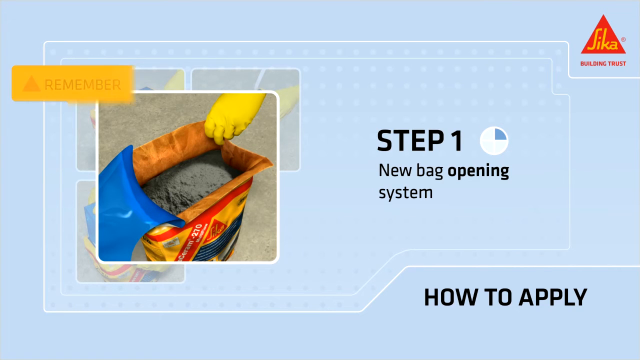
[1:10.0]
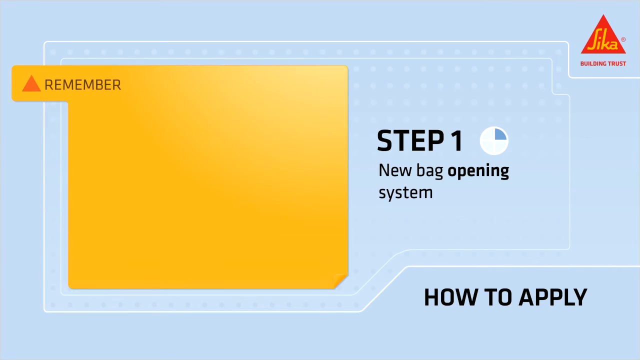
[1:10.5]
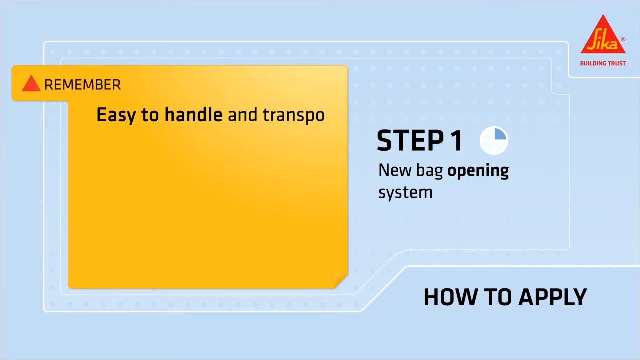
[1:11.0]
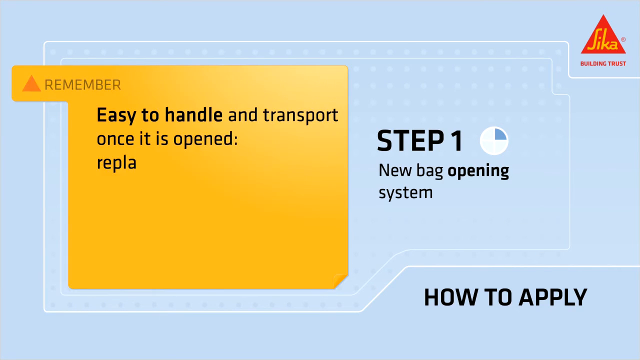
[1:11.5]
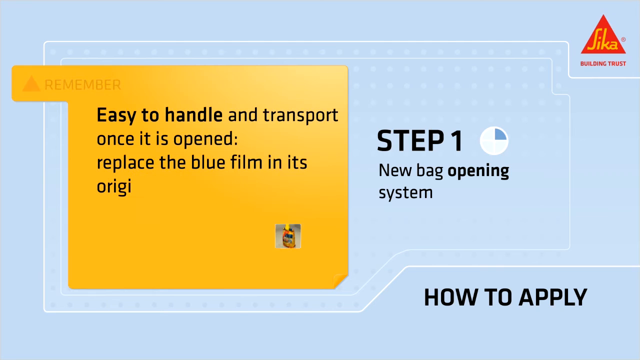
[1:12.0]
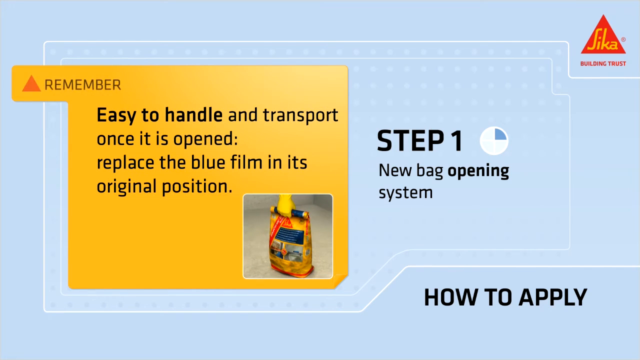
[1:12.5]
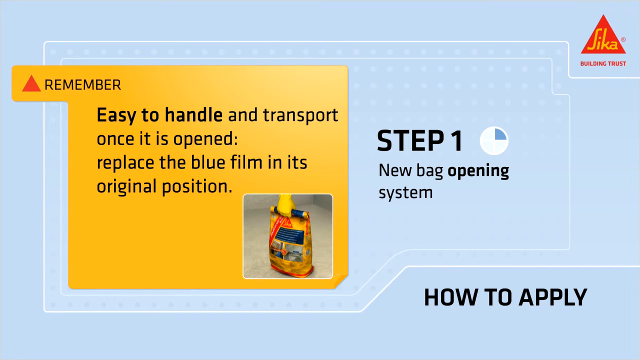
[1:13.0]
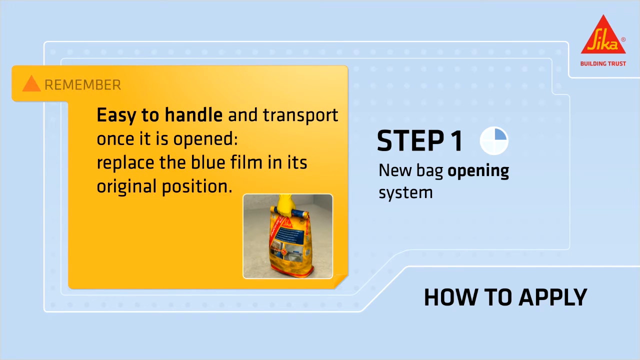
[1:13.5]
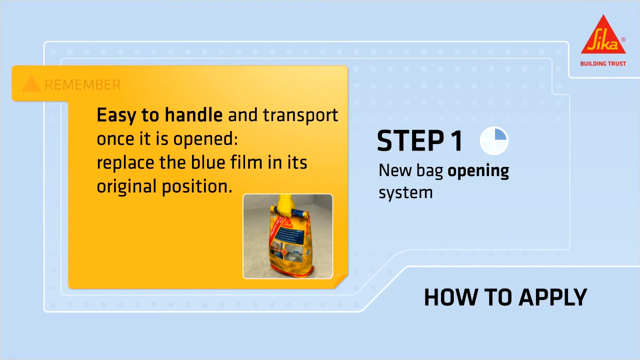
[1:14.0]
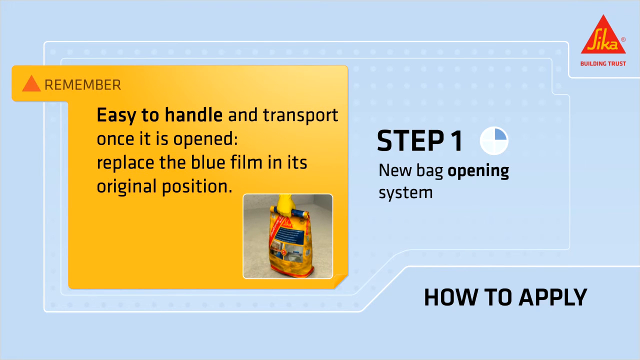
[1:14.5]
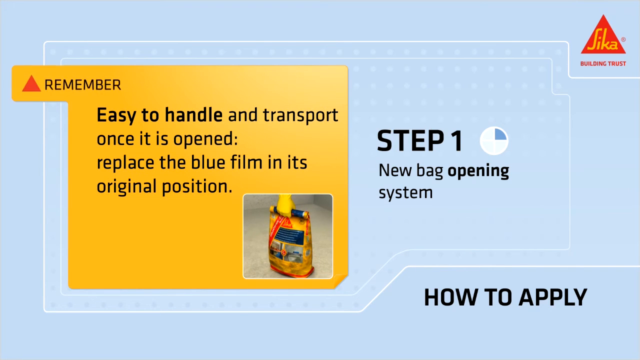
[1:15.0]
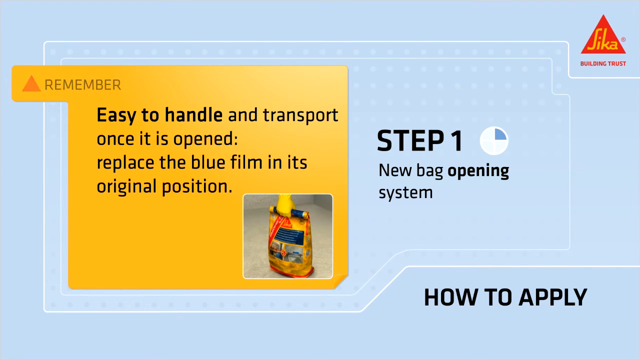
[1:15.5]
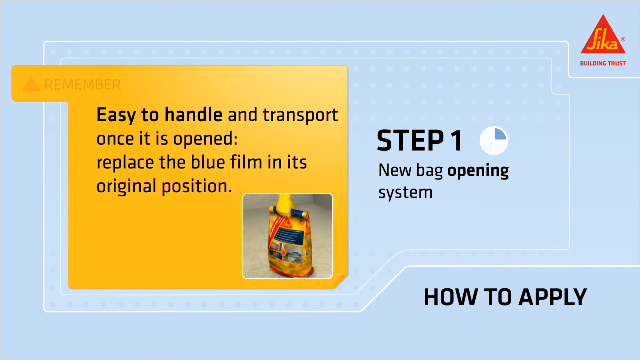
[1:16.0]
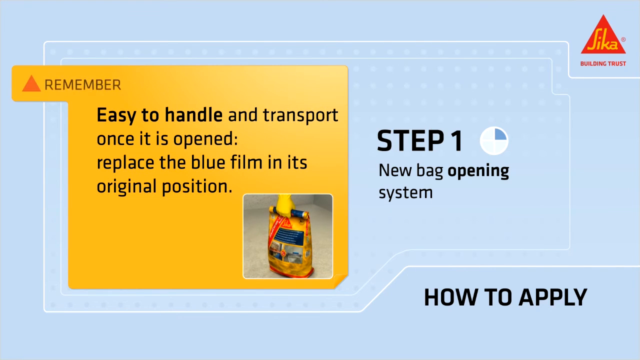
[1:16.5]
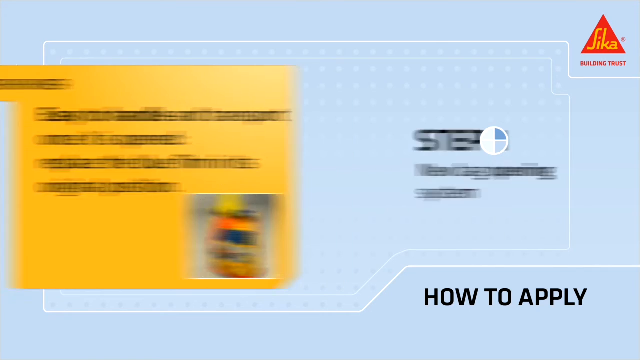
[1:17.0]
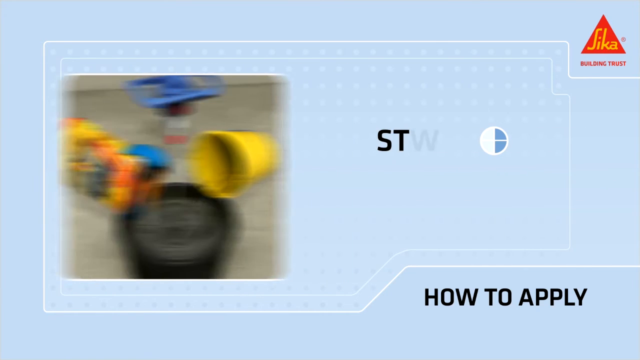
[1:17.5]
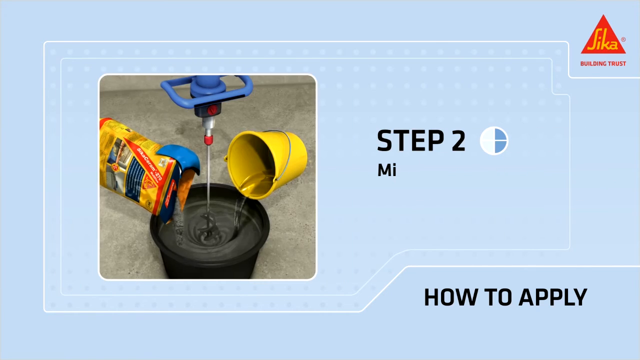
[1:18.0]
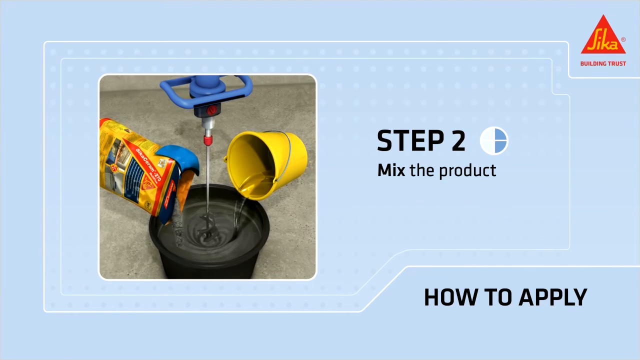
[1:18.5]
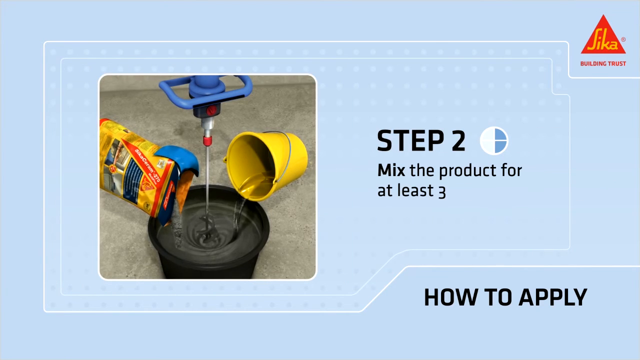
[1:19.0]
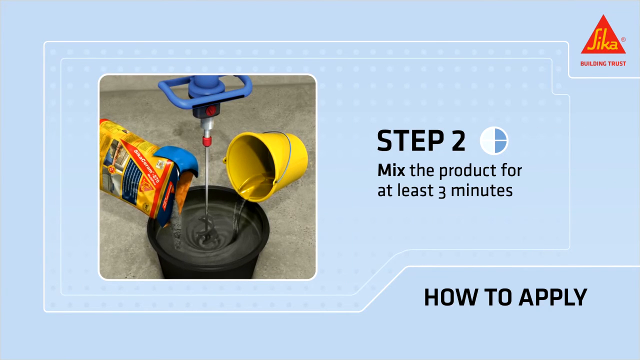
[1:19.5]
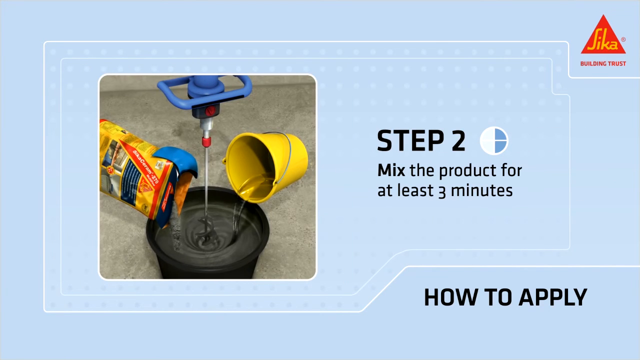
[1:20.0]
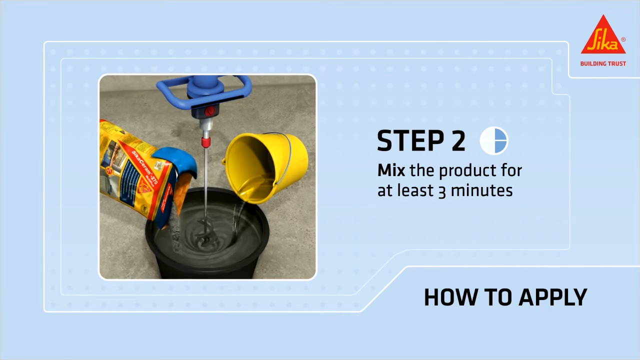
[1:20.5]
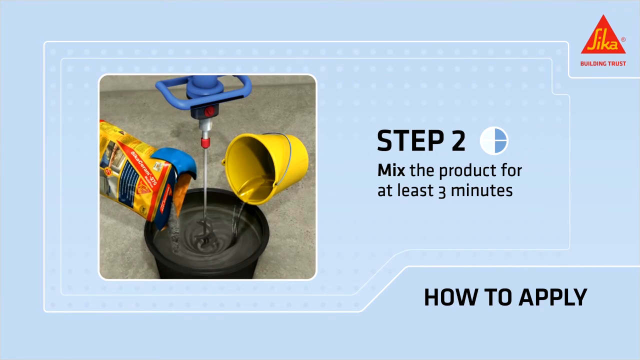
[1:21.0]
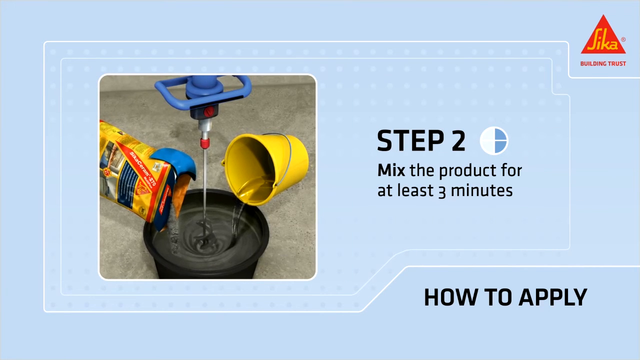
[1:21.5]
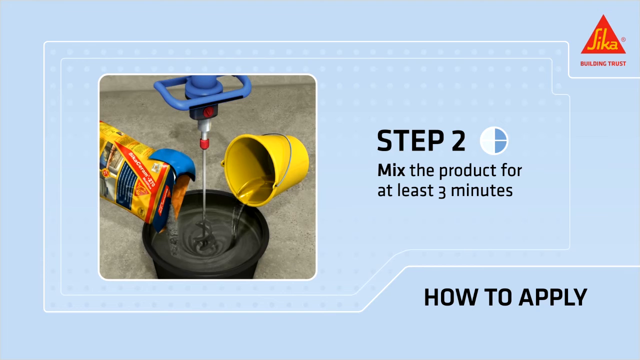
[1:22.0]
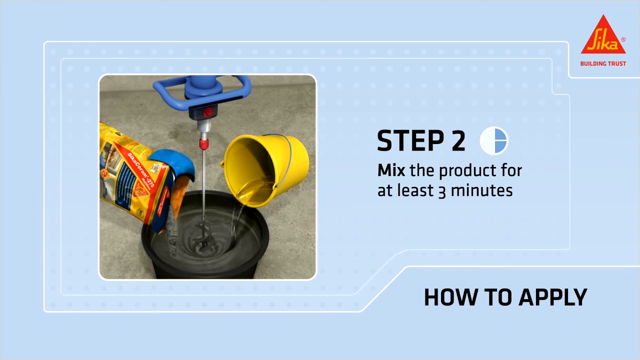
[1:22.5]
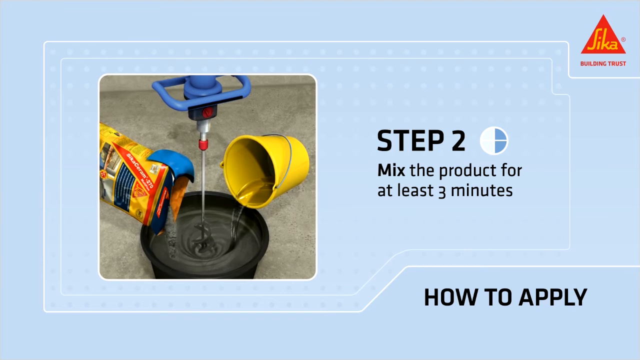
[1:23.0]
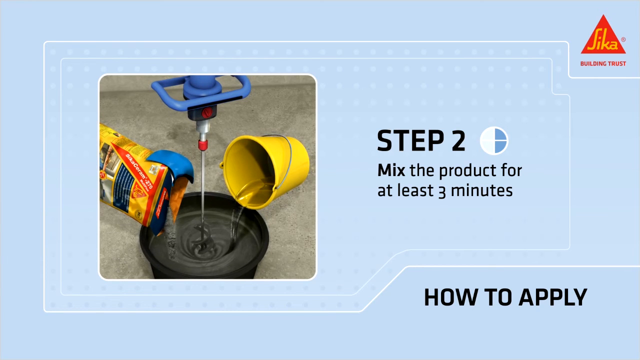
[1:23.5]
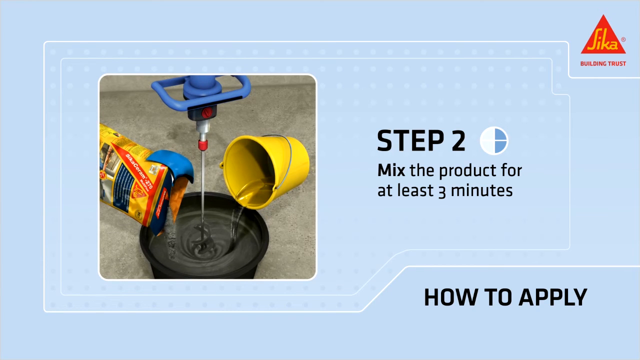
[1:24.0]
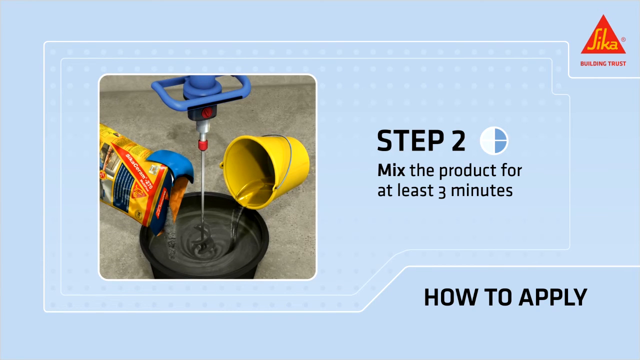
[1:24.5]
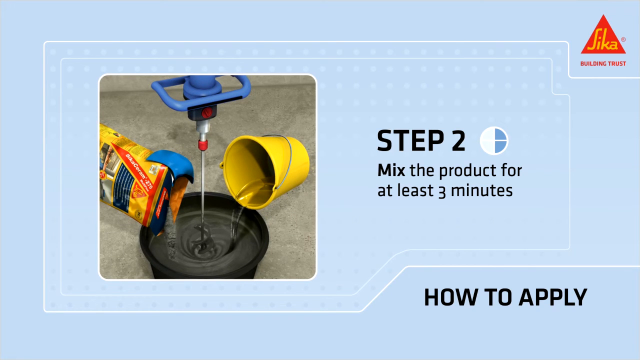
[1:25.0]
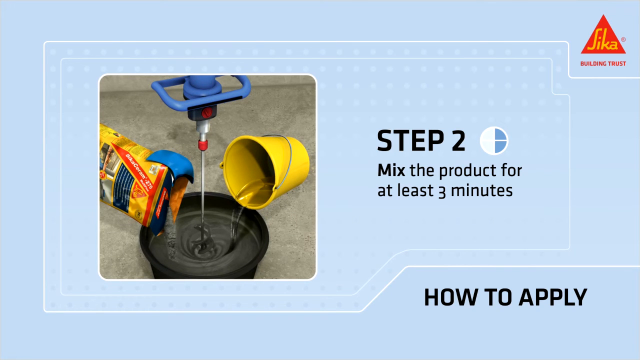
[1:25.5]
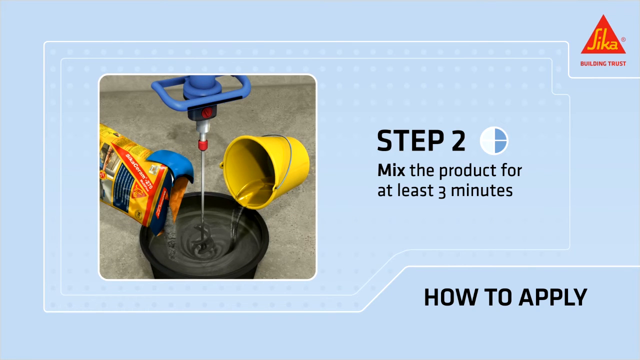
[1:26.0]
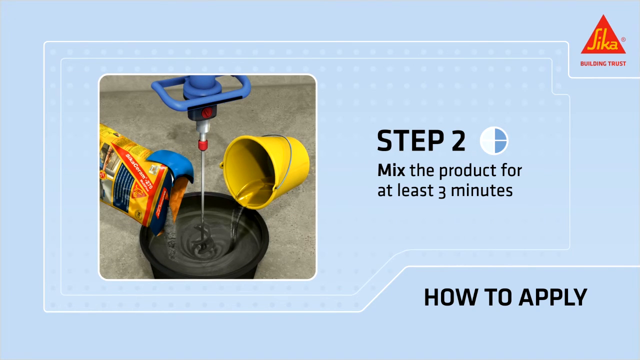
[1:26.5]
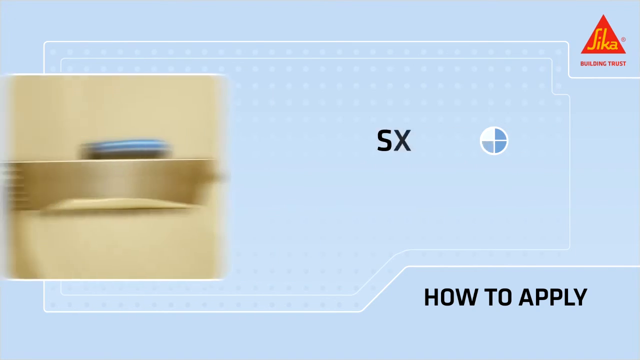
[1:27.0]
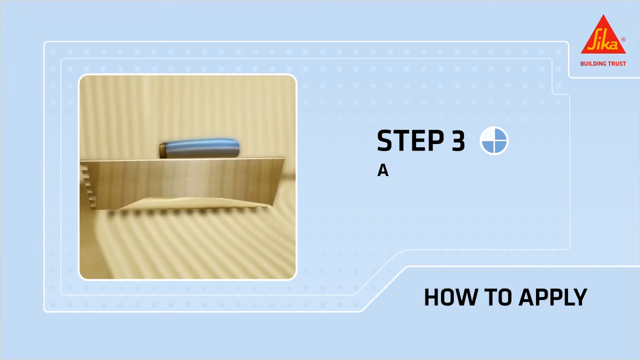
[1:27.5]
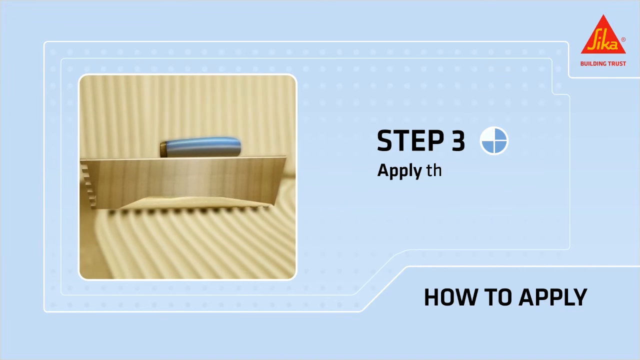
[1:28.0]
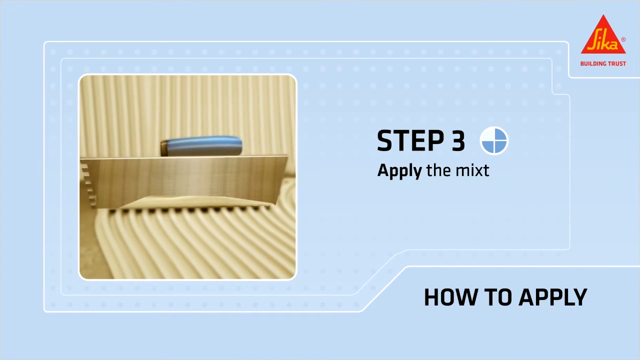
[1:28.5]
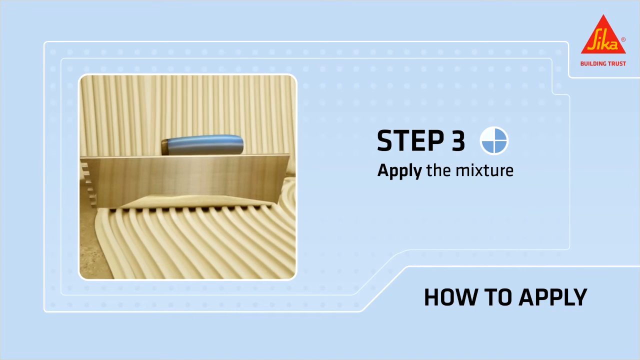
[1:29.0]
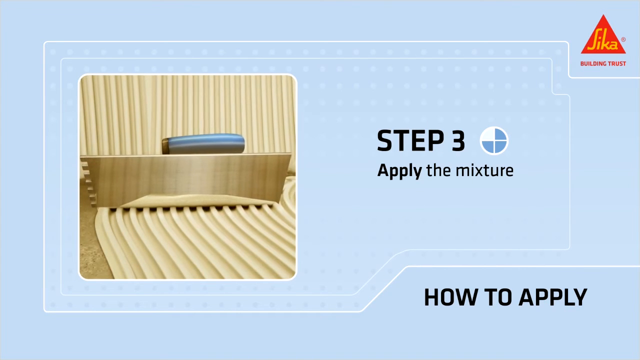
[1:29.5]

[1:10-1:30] The how-to-apply section shows "step one" in four parts: the bag is opened, the protective blue is pulled back, and the powder inside is revealed. Text reads "easy to handle and transport once it is opened. Replace the blue film in its original position," alongside a picture of the bag folded and rolled up so it can be grabbed like a handle. Step two reads "mix the product for at least three minutes," with a picture: a yellow bucket pours water into the mix, the bag on the left pours powder into the bucket, and in the middle is a blender, a large handheld device with a rotating blending fork at the bottom that blends the contents in the bucket. Step three reads "apply the mixture," with a picture of a trowel spreading it on the floor.